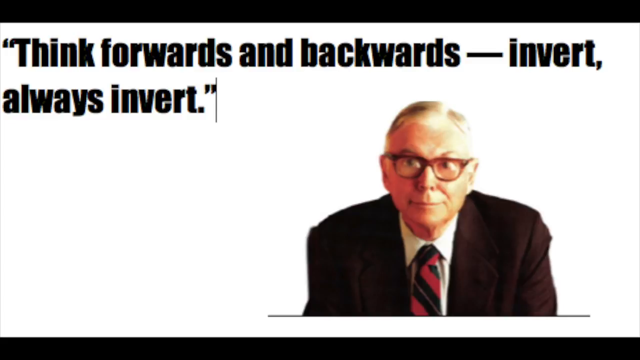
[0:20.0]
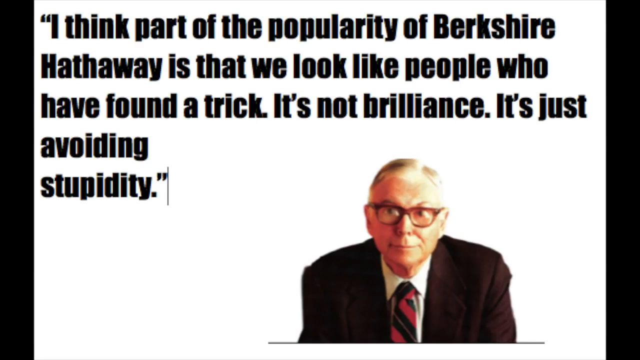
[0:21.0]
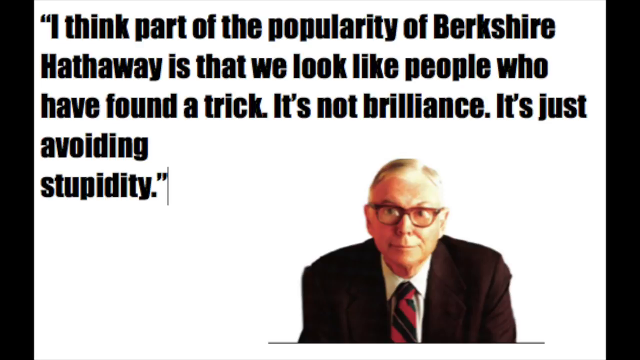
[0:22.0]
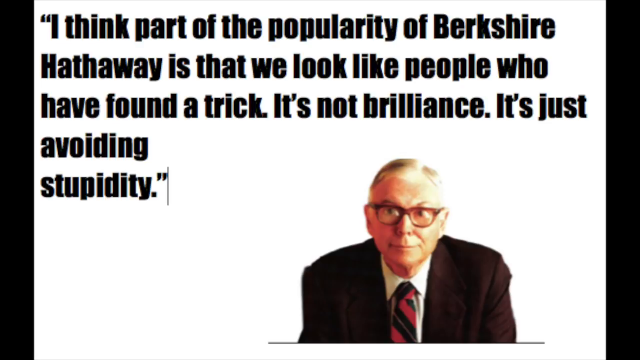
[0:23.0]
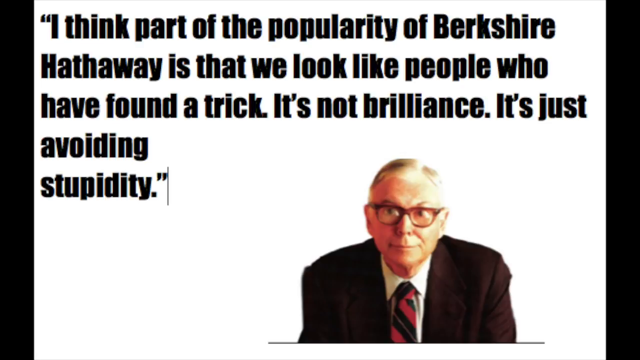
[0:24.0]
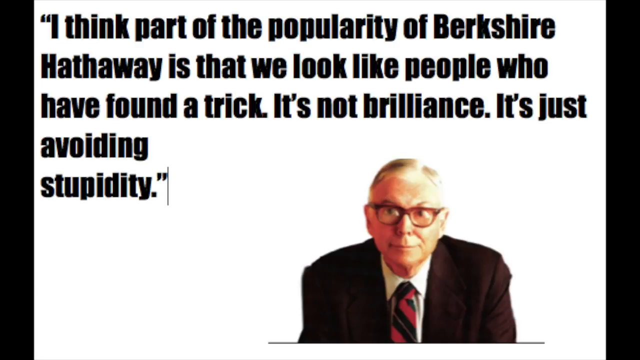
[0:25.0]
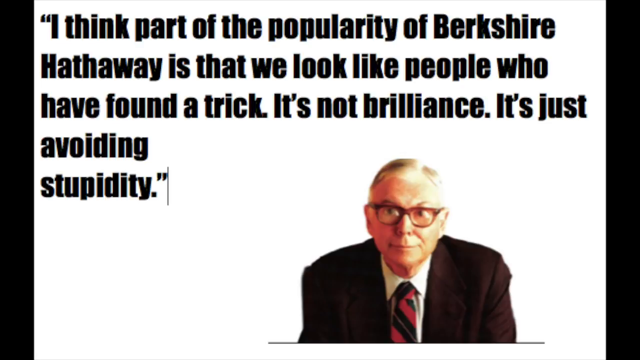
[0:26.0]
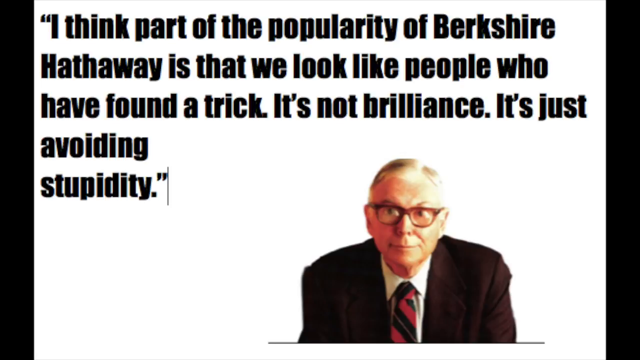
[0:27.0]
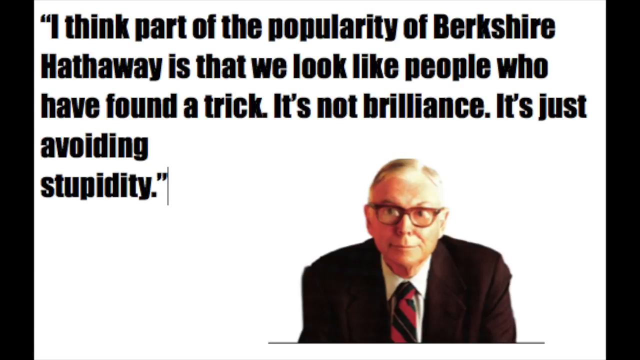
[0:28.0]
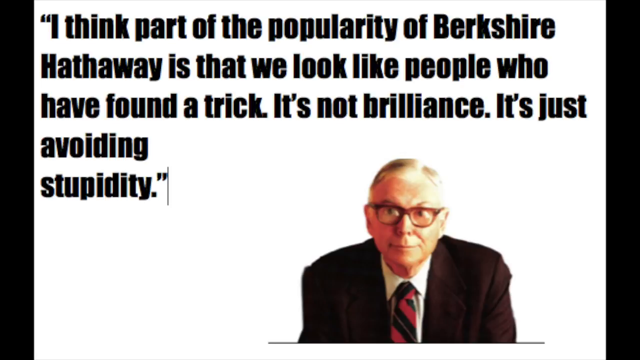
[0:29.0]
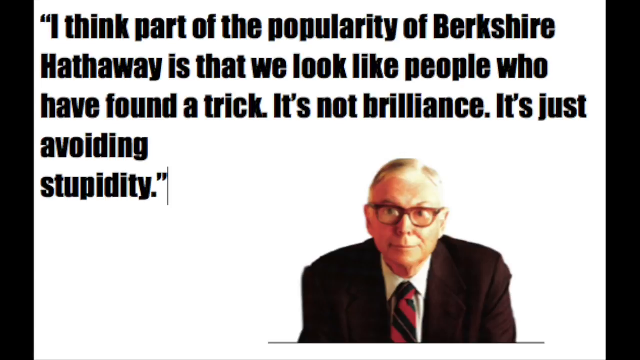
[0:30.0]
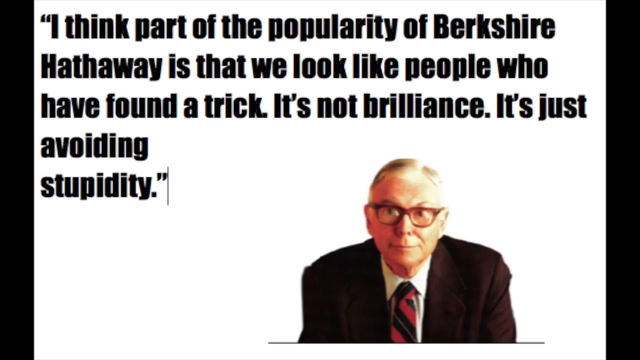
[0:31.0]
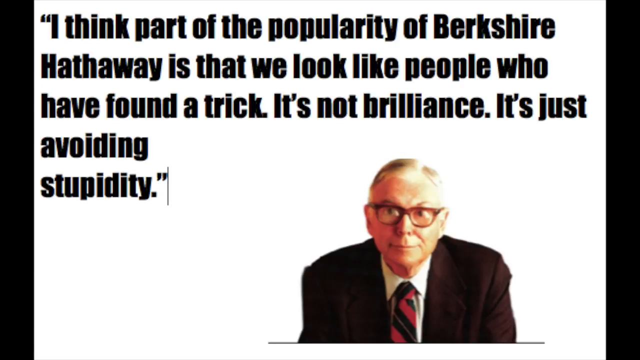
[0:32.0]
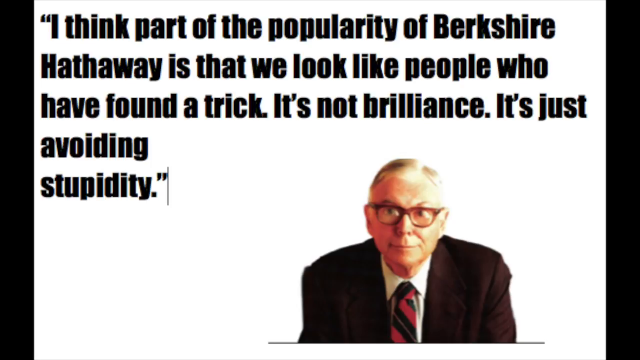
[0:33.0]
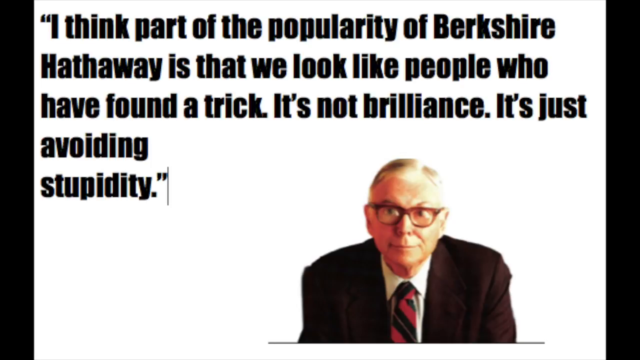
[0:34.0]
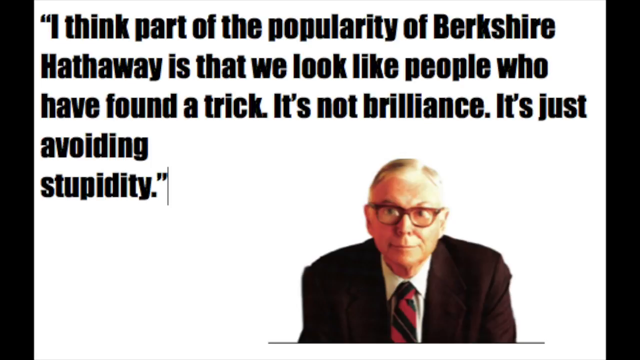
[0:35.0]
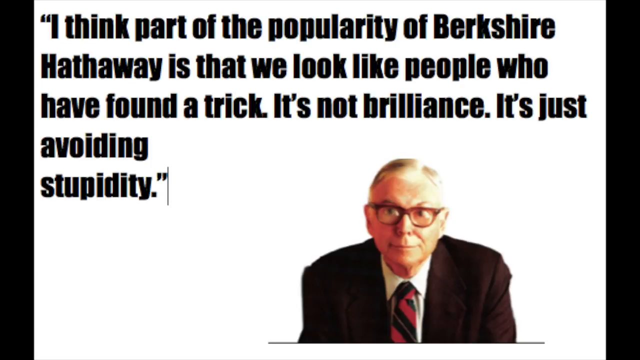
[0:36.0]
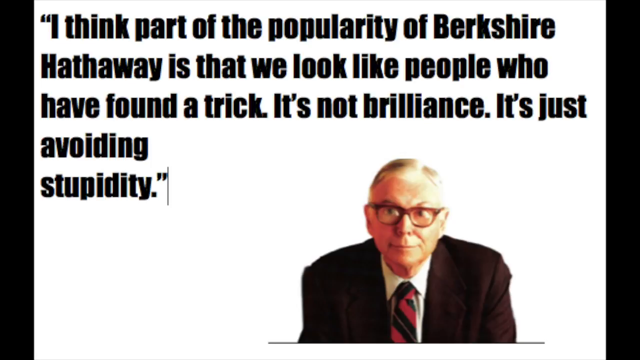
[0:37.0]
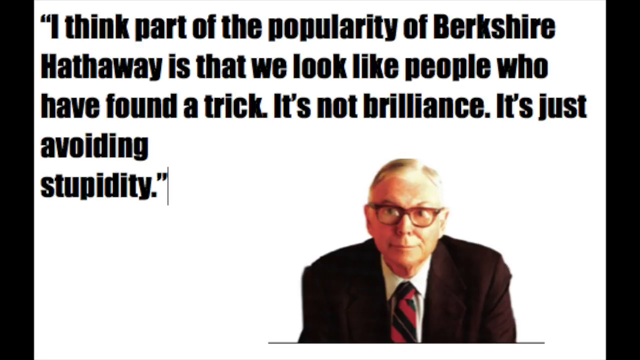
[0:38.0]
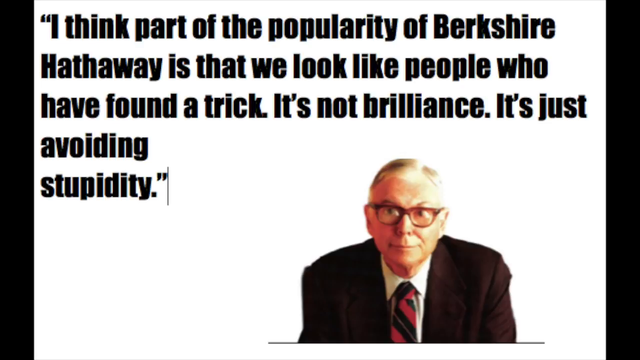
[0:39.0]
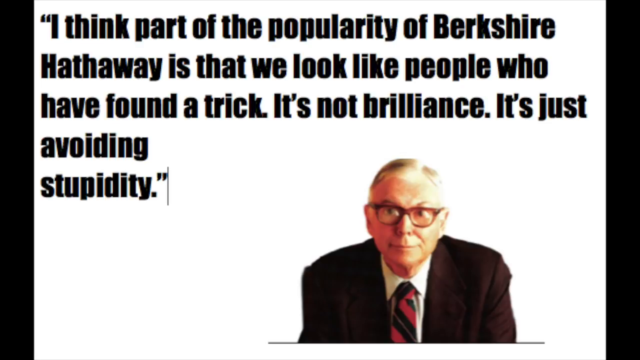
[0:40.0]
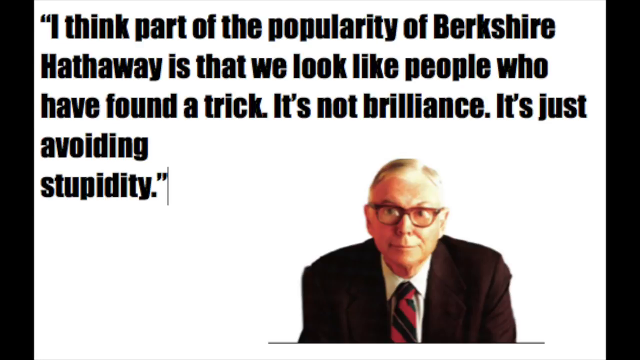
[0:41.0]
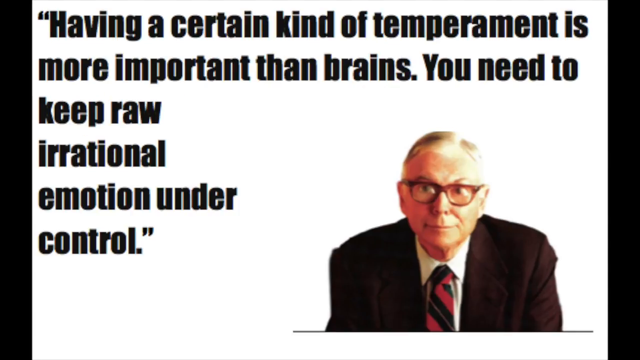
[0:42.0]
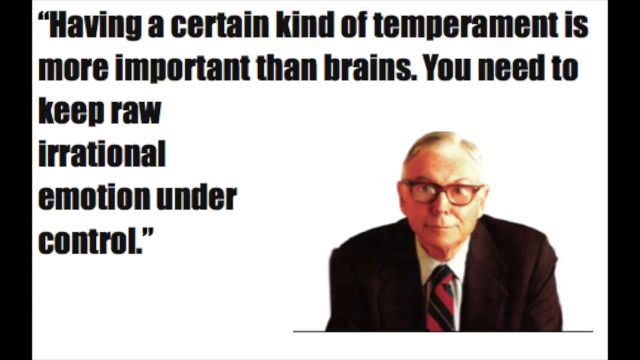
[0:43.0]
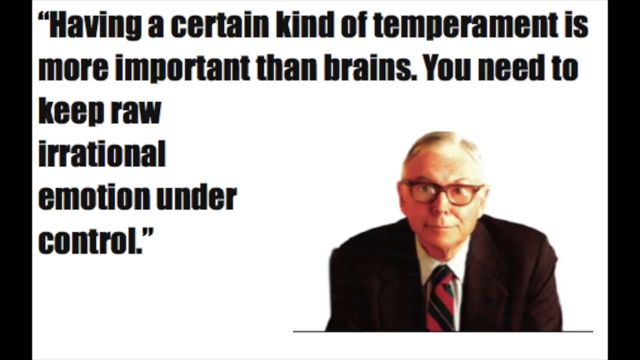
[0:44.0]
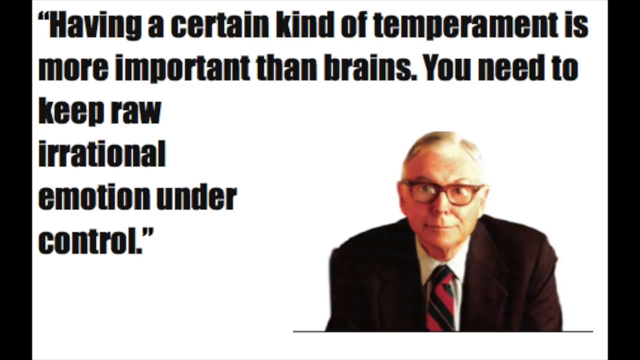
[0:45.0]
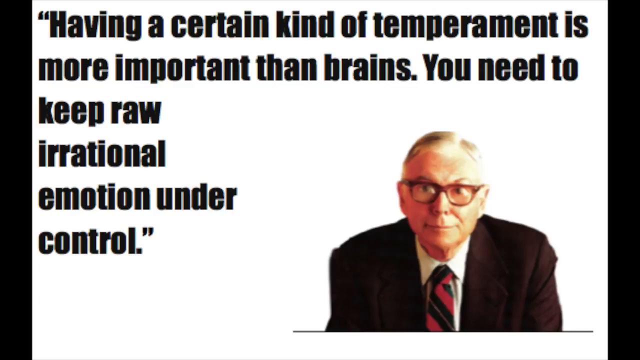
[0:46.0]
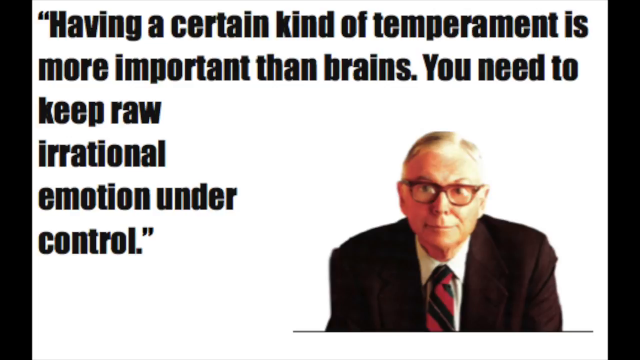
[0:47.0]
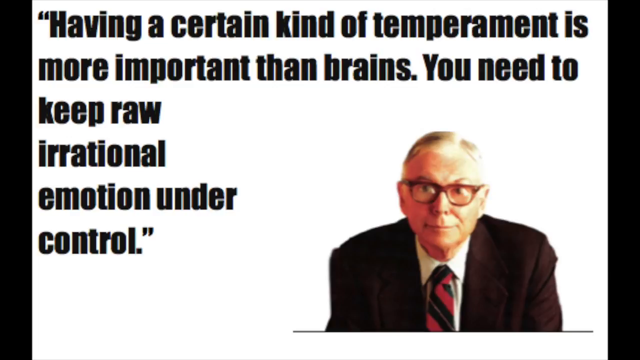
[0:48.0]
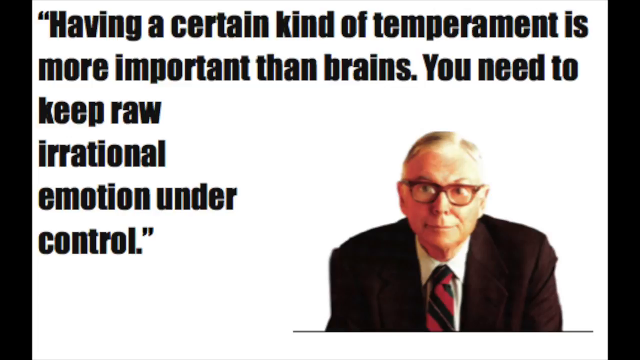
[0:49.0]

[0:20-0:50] The image shows a man who is sitting and leaning forward, looking somewhat sure of himself. He has gray hair parted to the right and wears glasses, a brown jacket with a white shirt underneath, and a red and black tie with stripes. Across the top of the screen the text reads "think forwards and backwards, invert, always invert." The screen then changes to read "I think part of the popularity of Berkshire Hathaway is that we look like people who have found the trick. It's not brilliance it's just avoiding stupidity." This quote stays on the screen for a while. The message changes once more at the very end, reading "having a certain kind of temperament is more important than brains," followed by a line beginning "You need to keep."